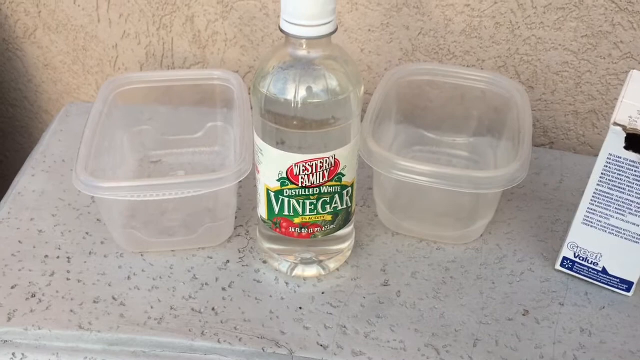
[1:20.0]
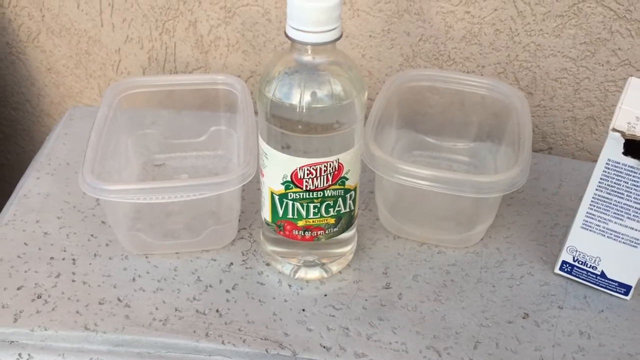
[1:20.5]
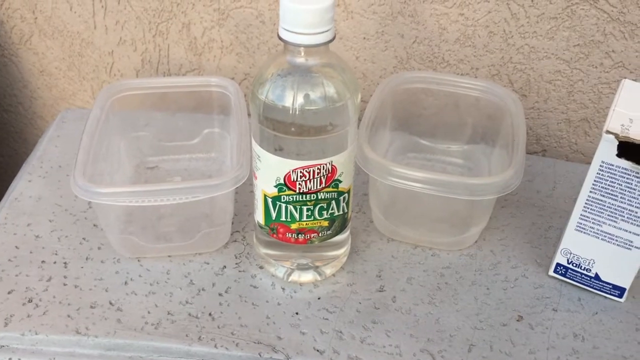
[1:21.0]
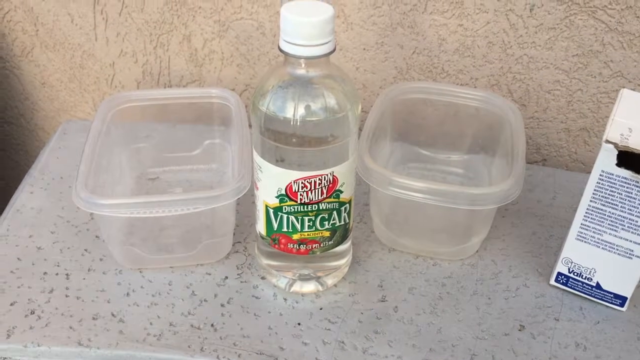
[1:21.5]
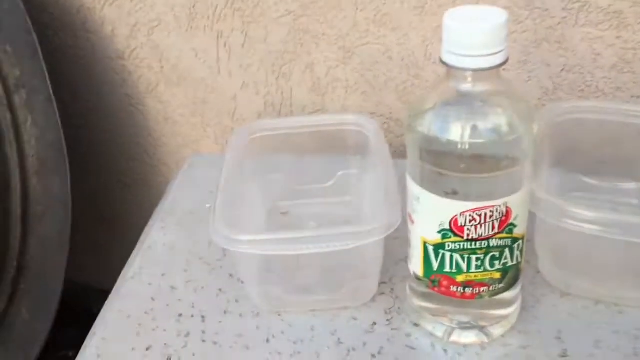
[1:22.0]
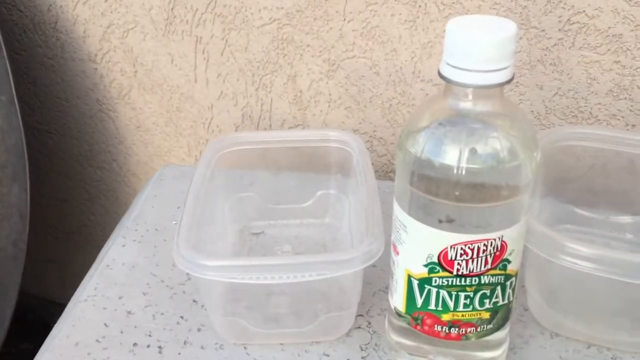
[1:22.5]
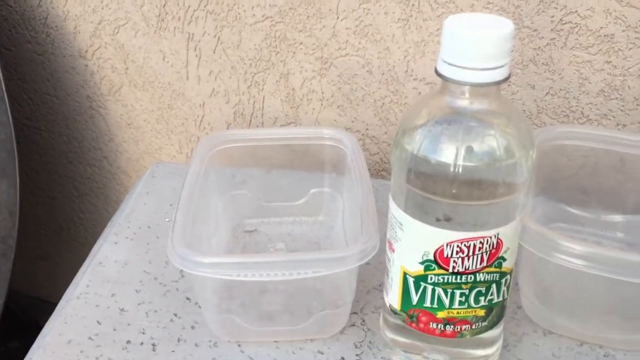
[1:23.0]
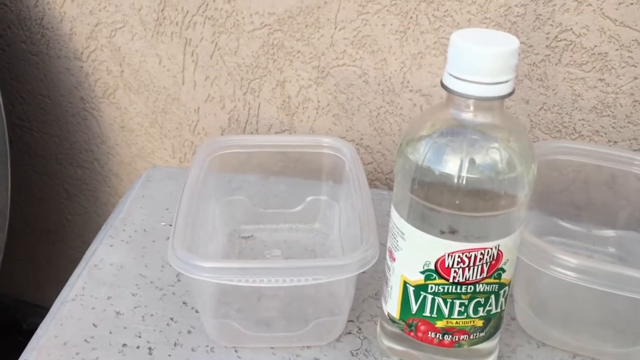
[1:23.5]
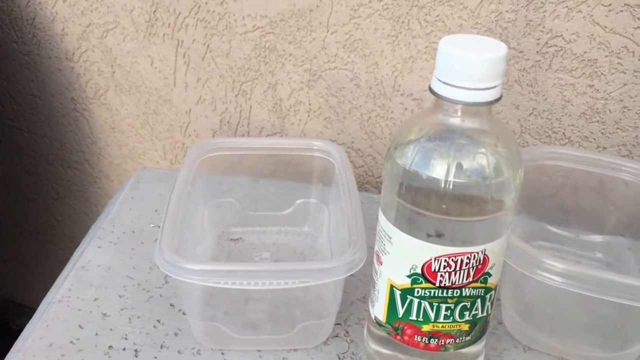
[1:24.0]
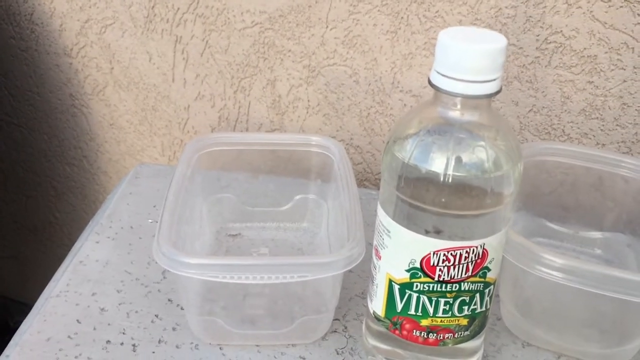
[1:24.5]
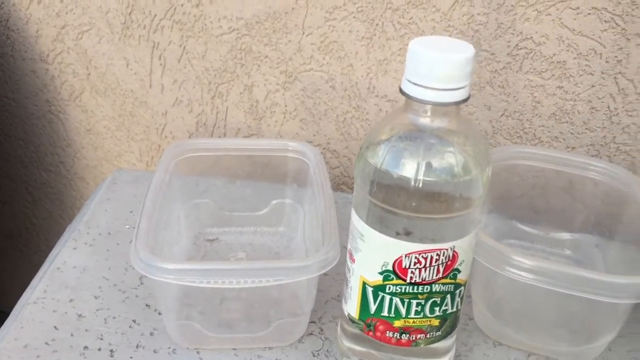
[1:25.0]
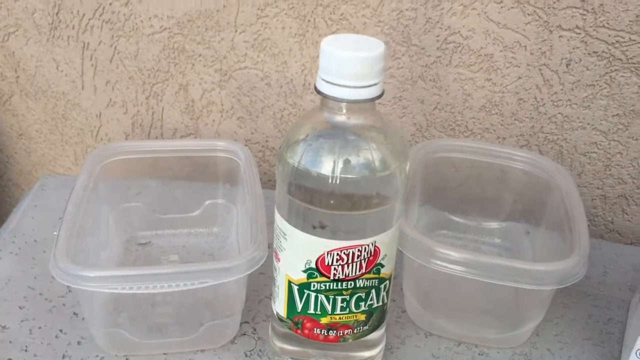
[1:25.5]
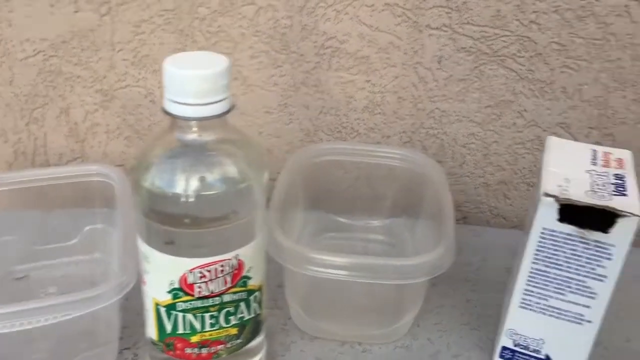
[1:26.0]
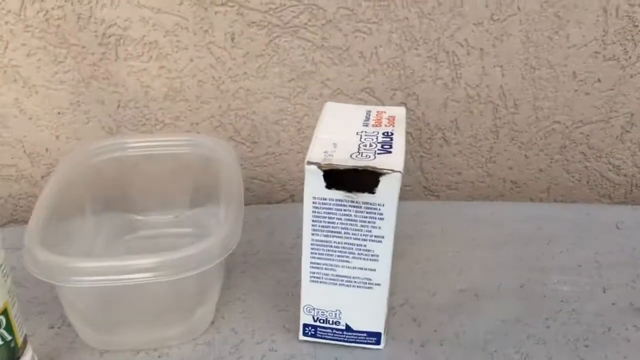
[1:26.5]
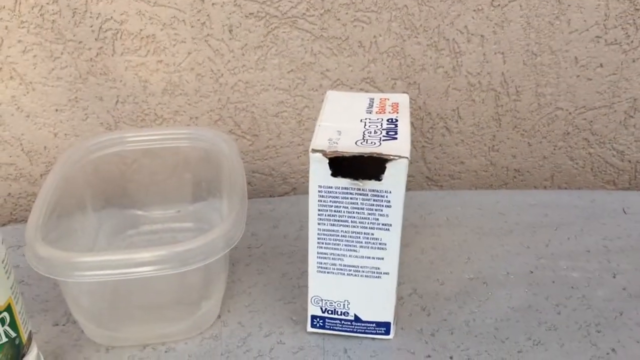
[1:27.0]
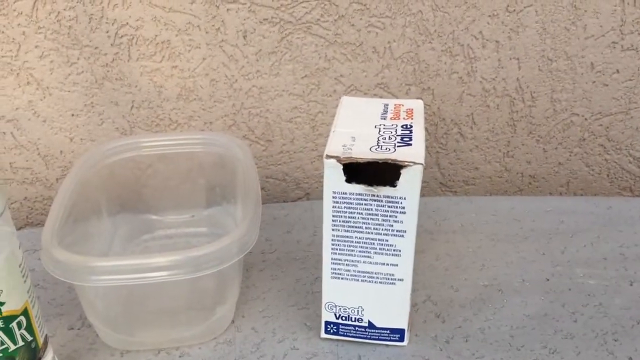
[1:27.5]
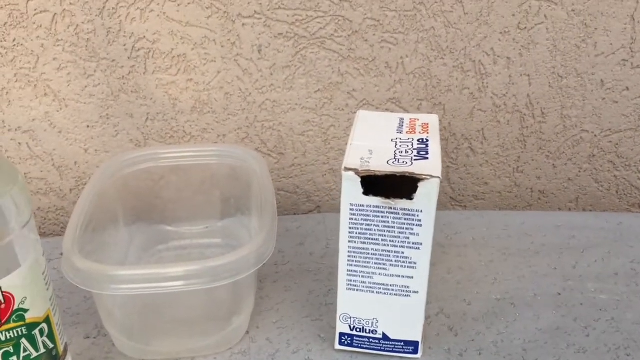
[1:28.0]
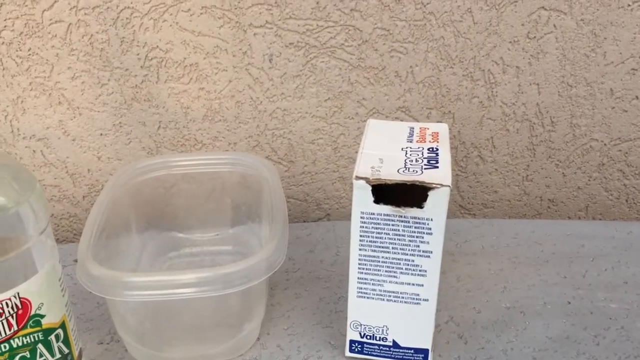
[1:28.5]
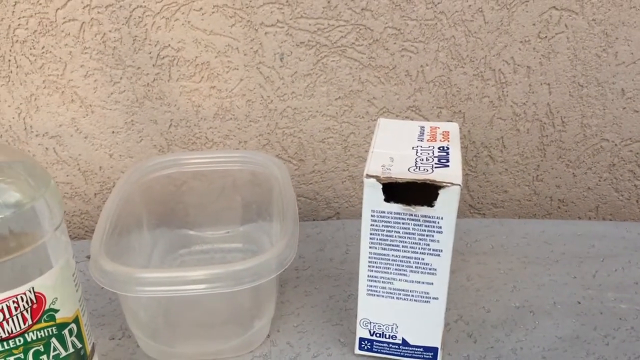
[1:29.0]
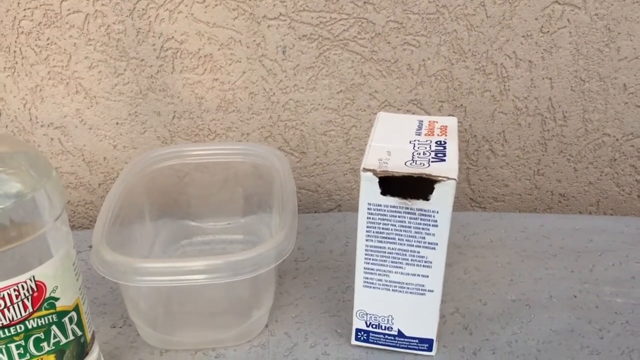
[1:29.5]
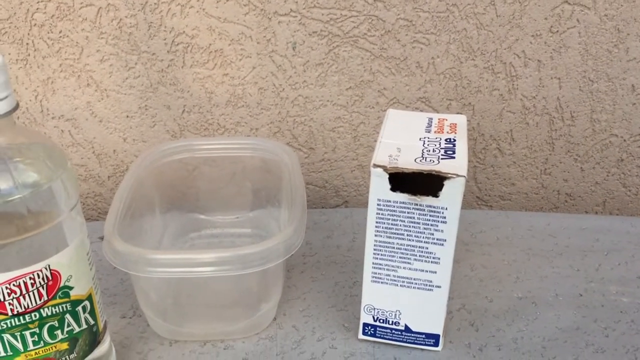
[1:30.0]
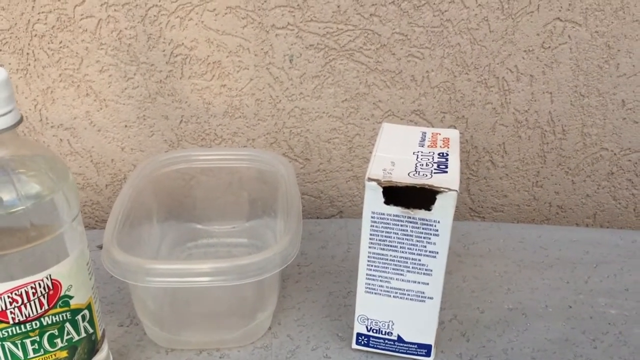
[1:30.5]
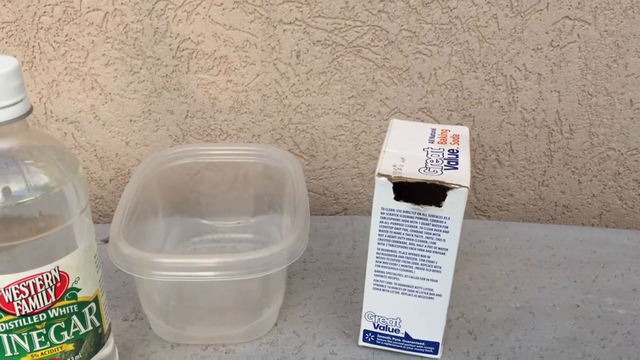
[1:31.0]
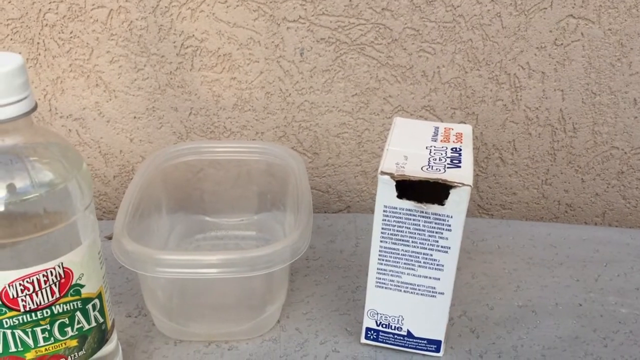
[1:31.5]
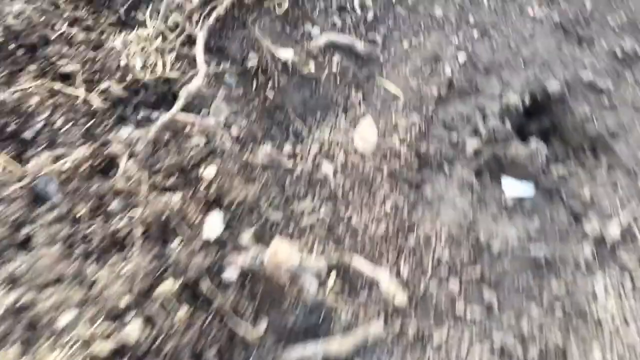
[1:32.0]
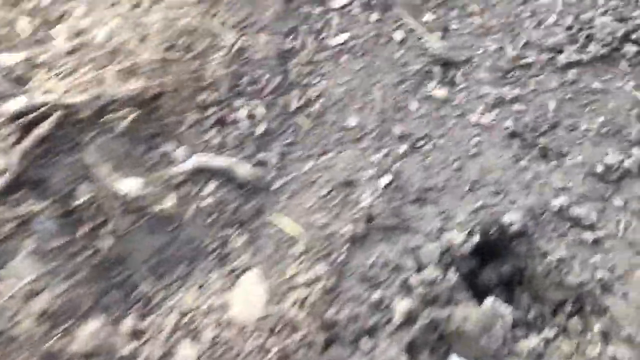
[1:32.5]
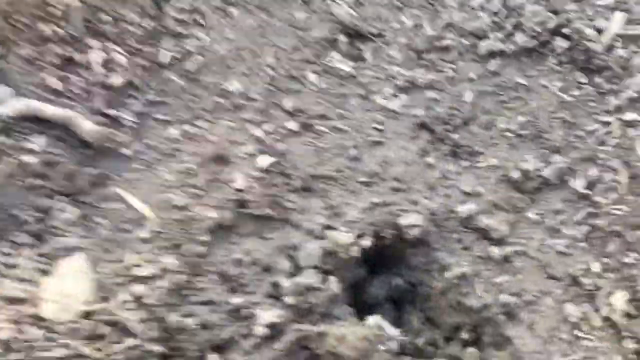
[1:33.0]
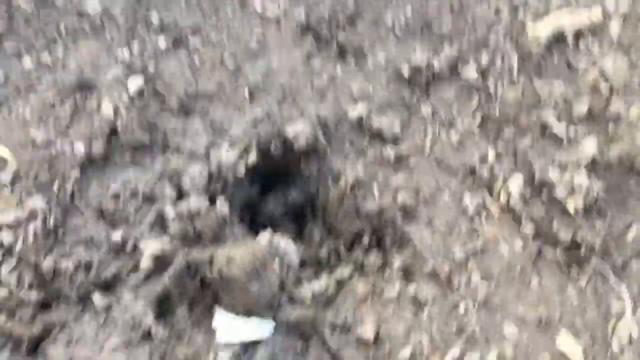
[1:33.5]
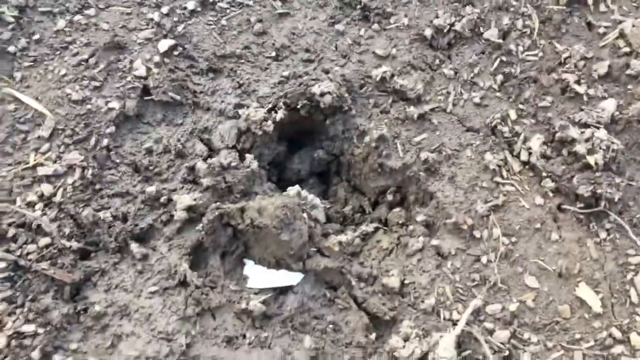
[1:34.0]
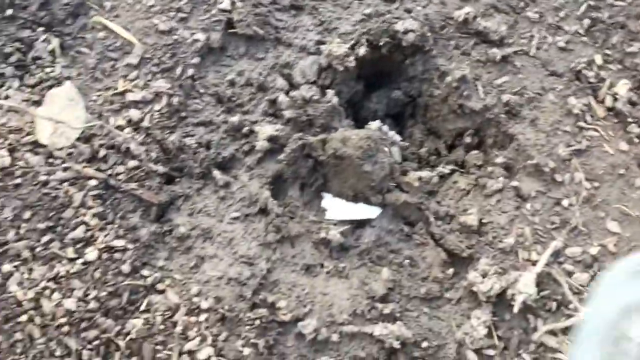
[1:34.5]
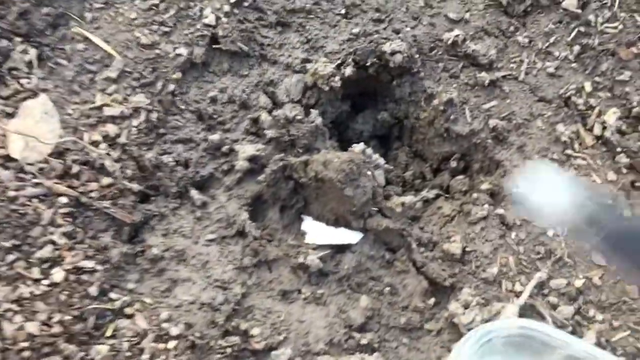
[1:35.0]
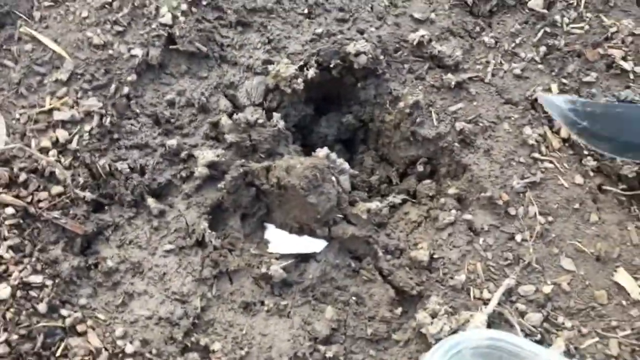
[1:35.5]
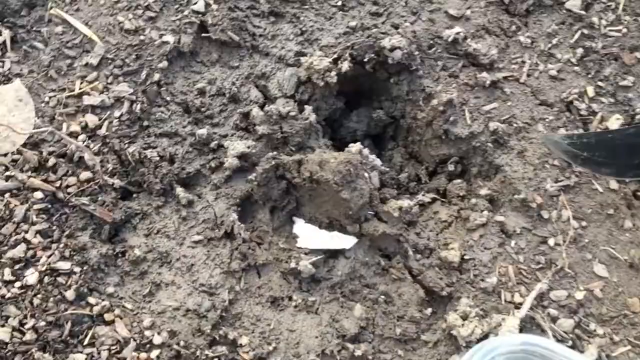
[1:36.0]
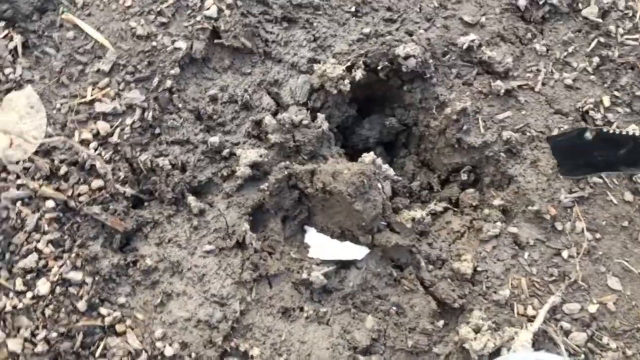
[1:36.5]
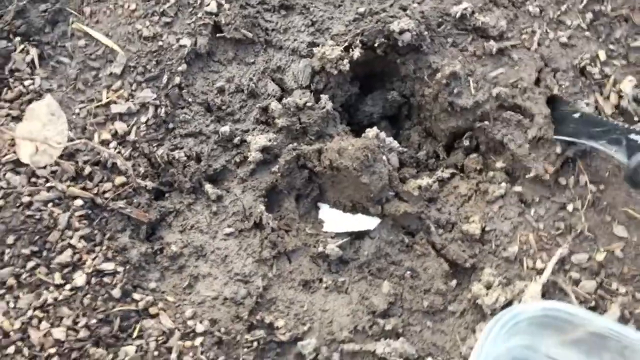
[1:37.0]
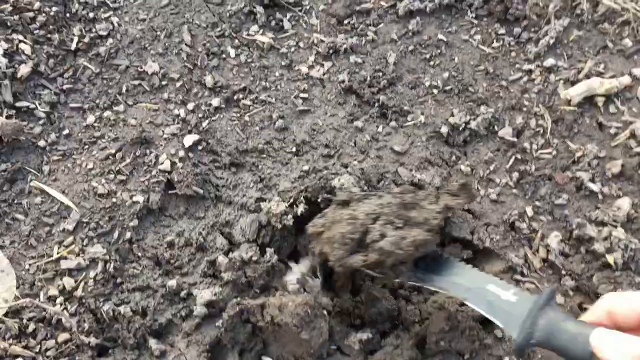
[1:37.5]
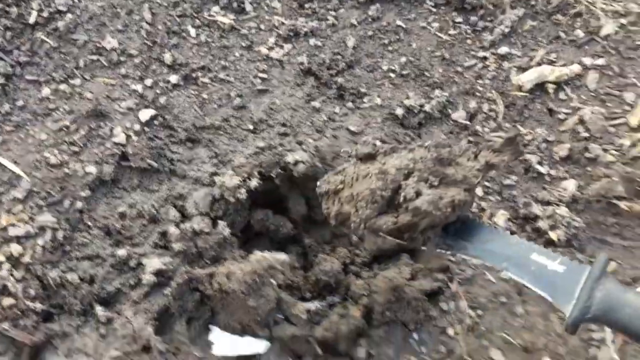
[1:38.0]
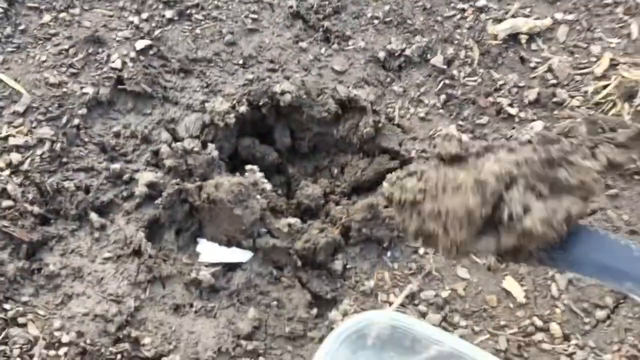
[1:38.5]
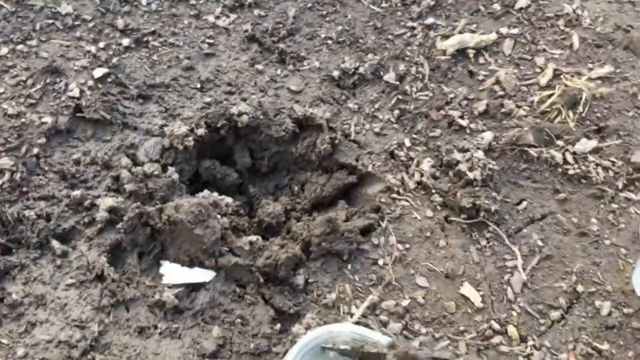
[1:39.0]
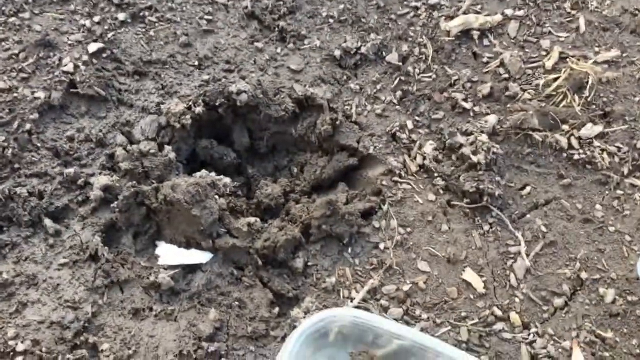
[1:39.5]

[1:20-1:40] A white tabletop that sort of looks like marble is shown, with a darker wall with the same design in the background. On the left of the tabletop is a small plastic Tupperware container, to its right a bottle of vinegar, then another Tupperware, and to the right of that a box of what looks like Great Value baking soda. The camera zooms in on the Tupperware on the left, then looks at the vinegar, then the baking soda and the Tupperware on the right. The view then turns to the camera looking down at the ground, which looks like wet dirt and soil, like mud. A knife comes in from the right side of the screen, scoops up a clump of this mud or soil and puts it into a clear Tupperware at the bottom of the screen.